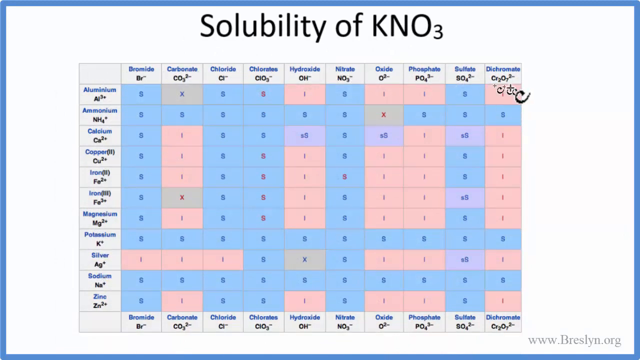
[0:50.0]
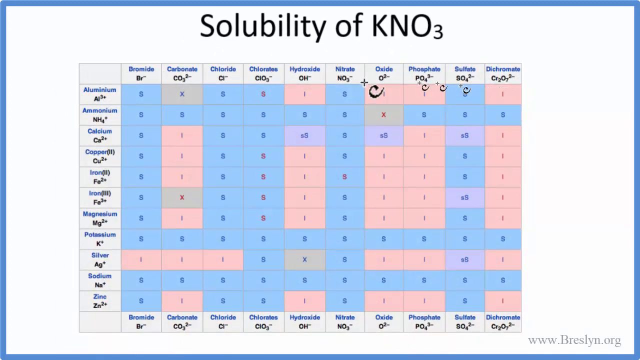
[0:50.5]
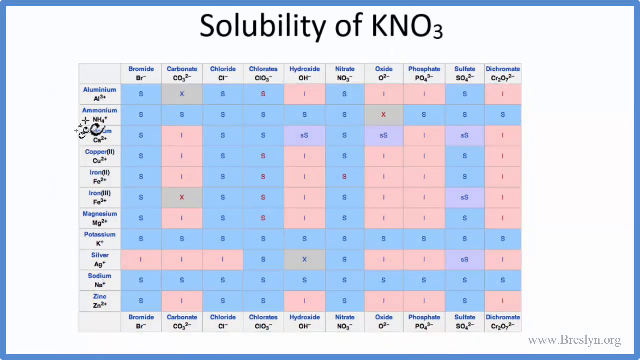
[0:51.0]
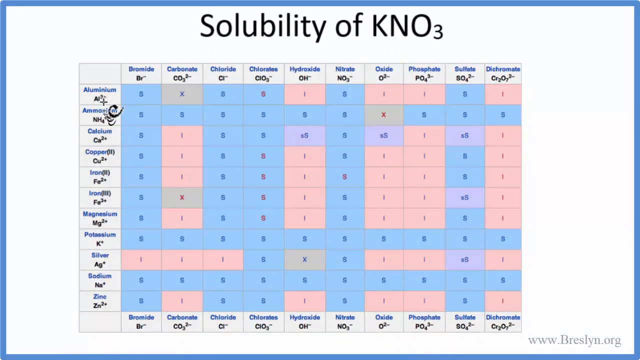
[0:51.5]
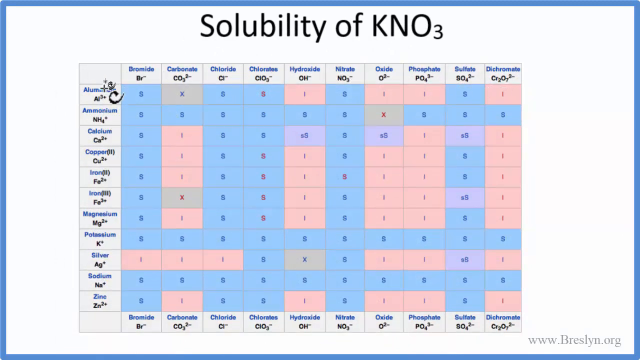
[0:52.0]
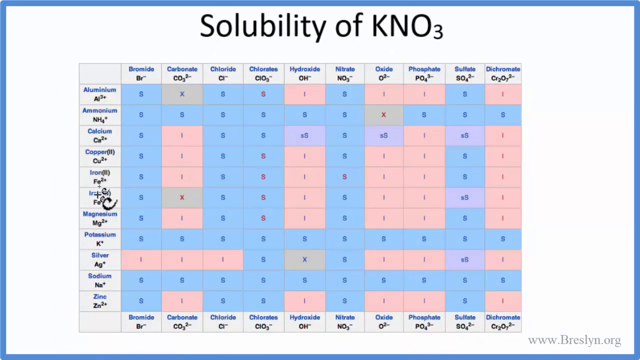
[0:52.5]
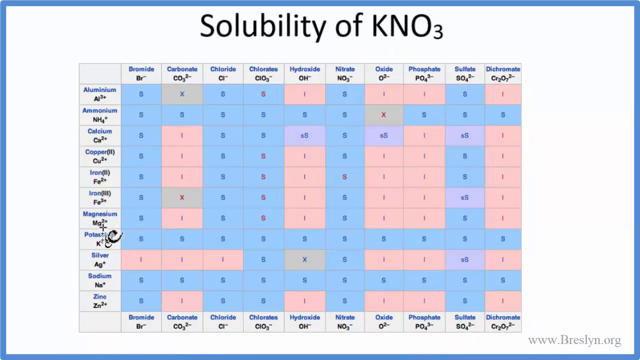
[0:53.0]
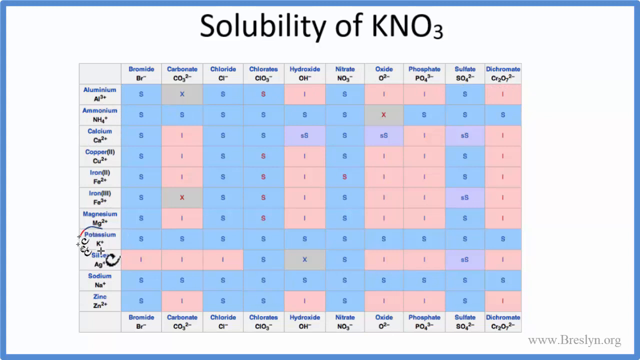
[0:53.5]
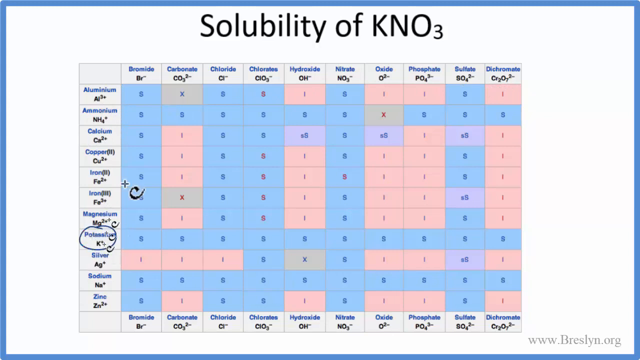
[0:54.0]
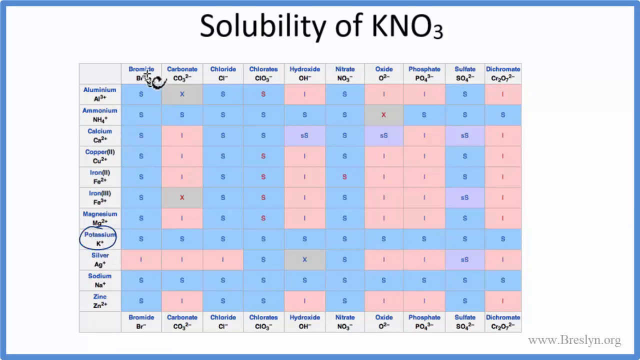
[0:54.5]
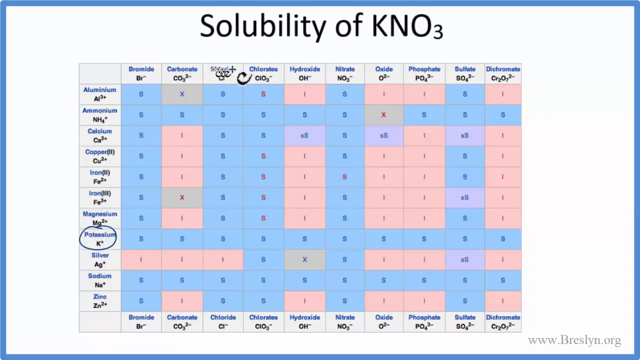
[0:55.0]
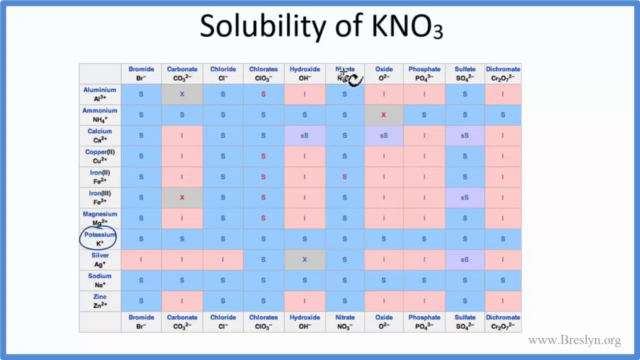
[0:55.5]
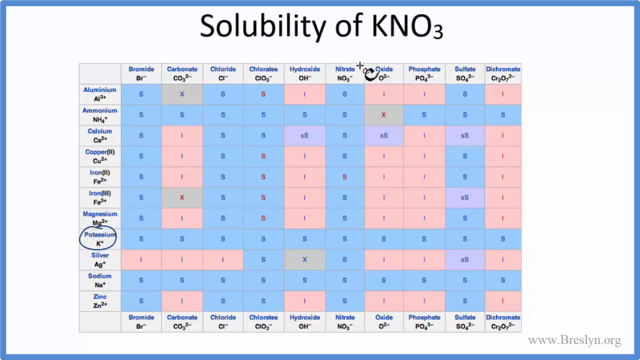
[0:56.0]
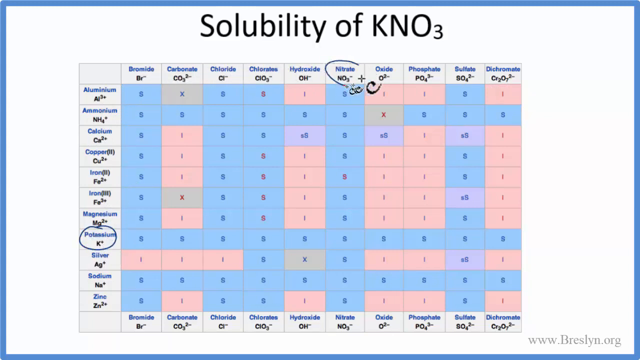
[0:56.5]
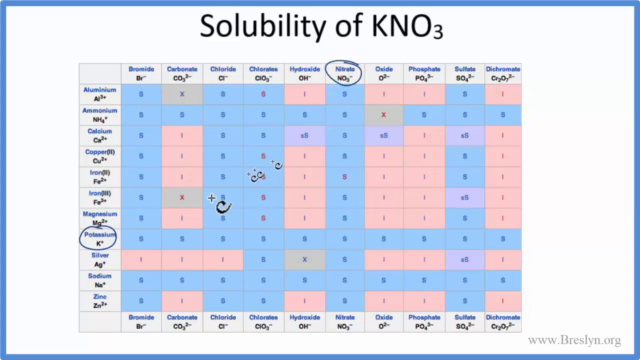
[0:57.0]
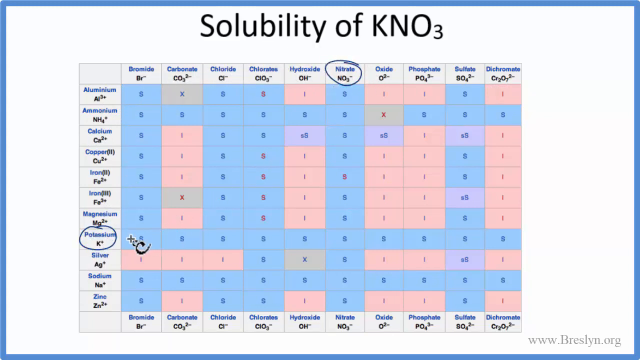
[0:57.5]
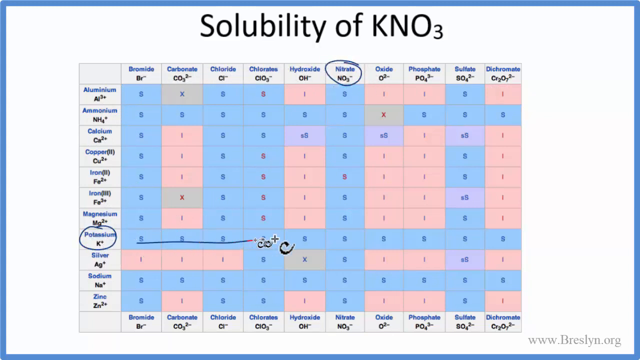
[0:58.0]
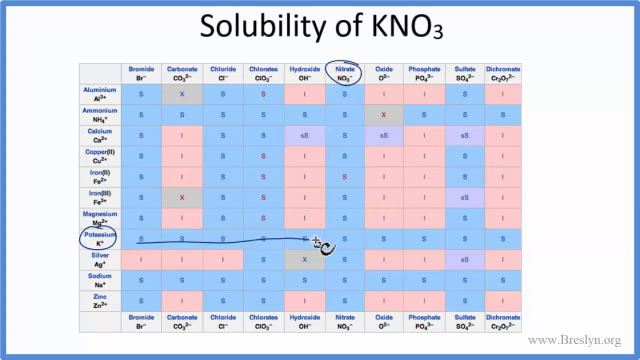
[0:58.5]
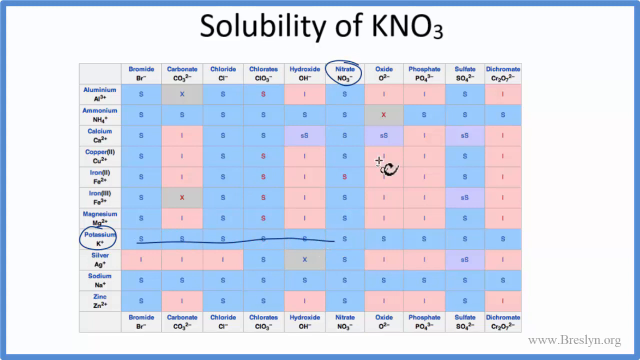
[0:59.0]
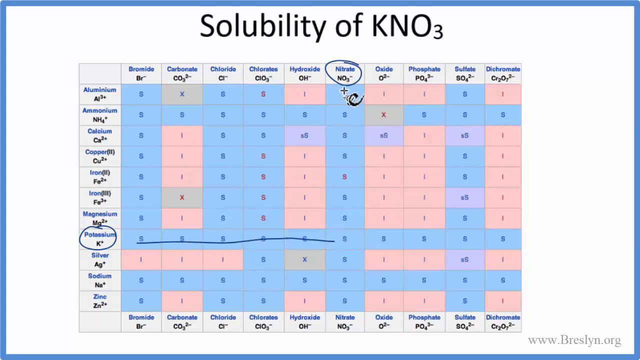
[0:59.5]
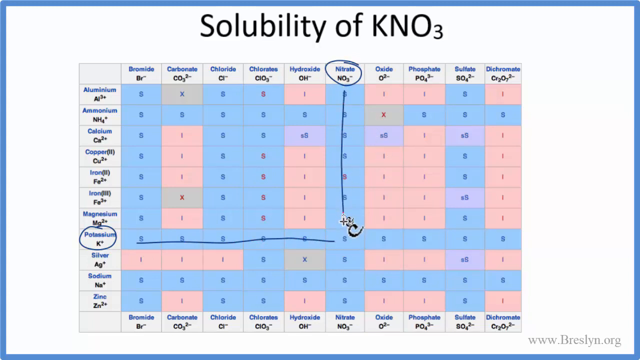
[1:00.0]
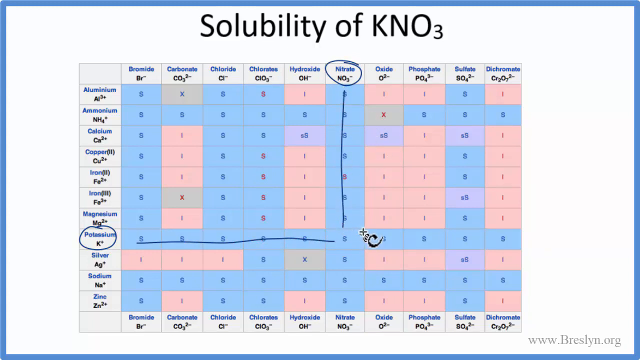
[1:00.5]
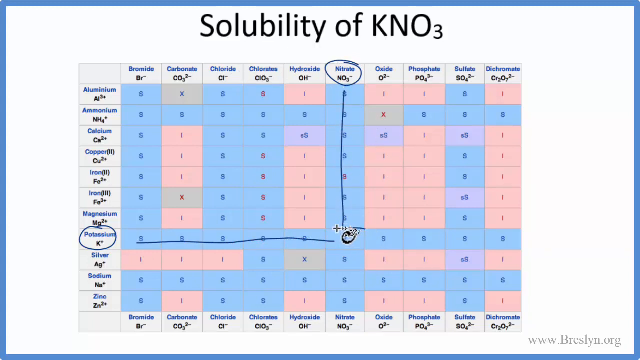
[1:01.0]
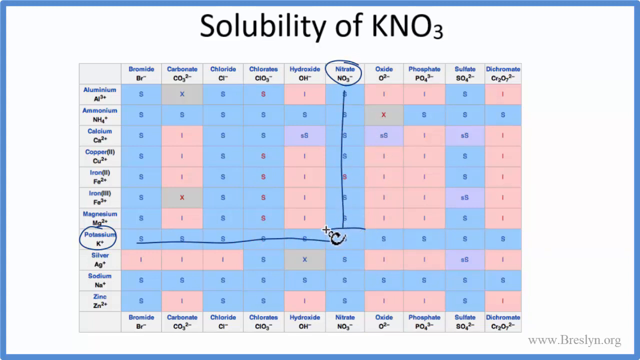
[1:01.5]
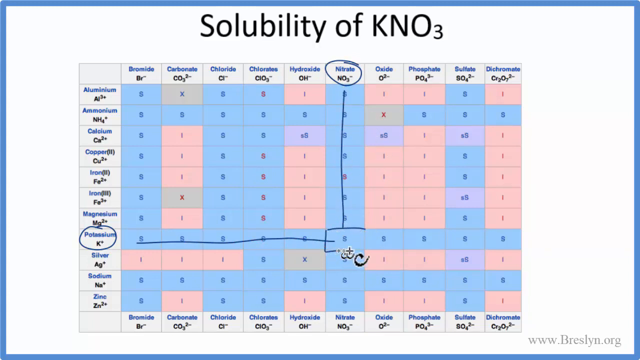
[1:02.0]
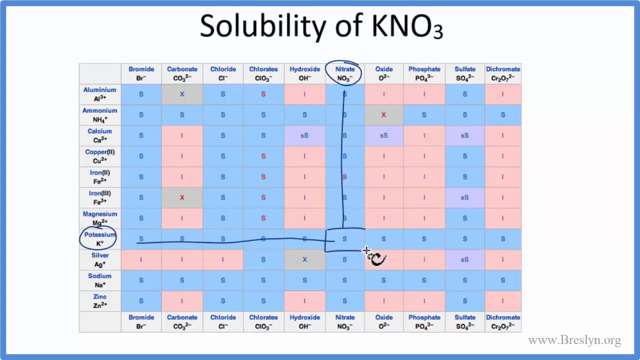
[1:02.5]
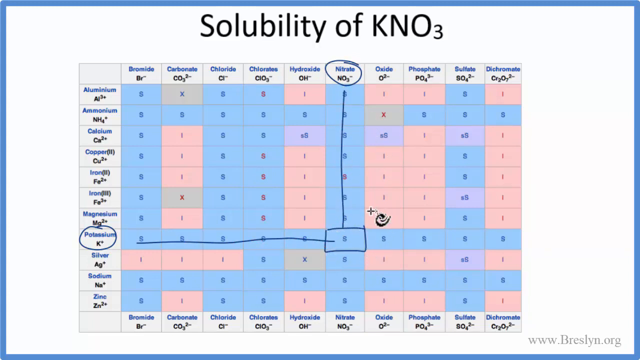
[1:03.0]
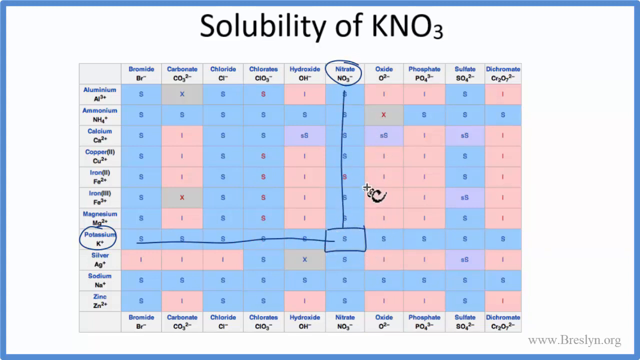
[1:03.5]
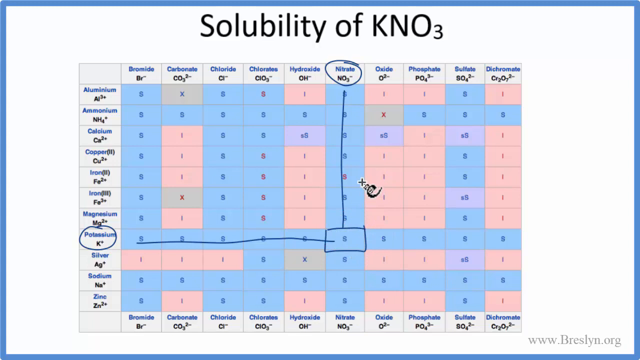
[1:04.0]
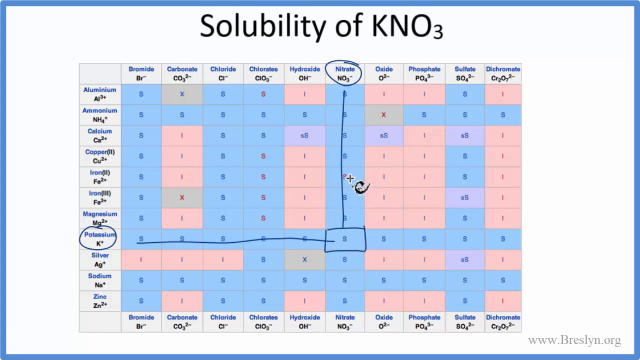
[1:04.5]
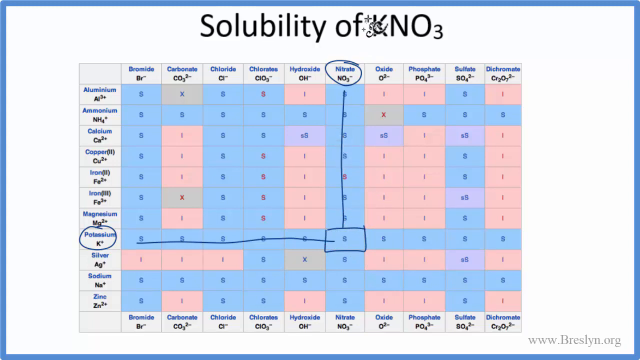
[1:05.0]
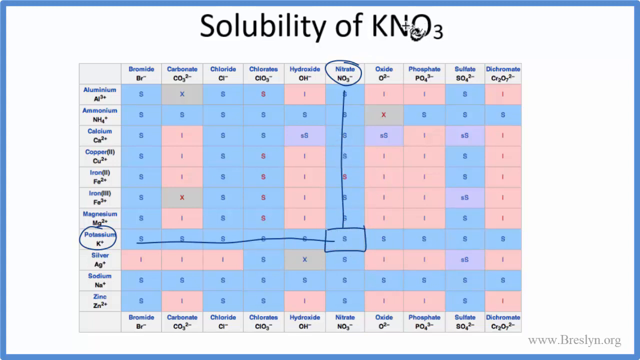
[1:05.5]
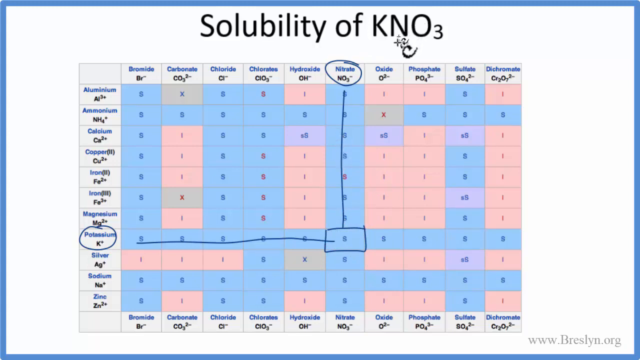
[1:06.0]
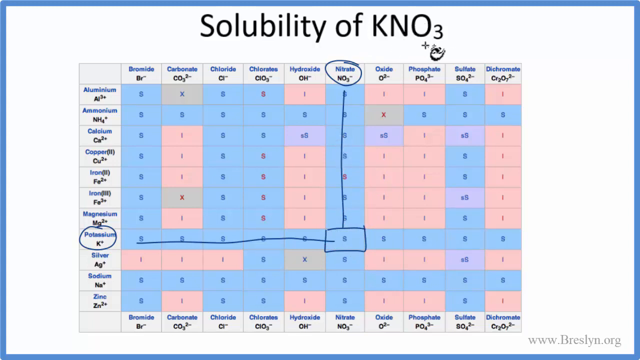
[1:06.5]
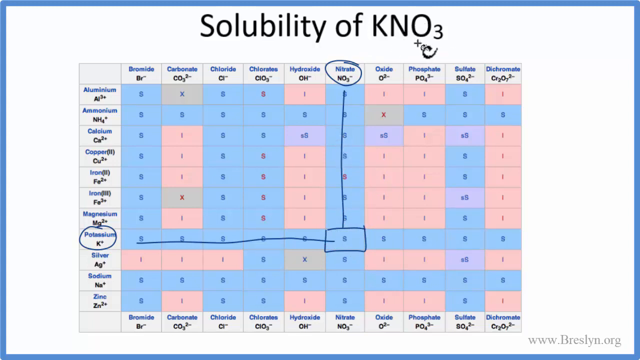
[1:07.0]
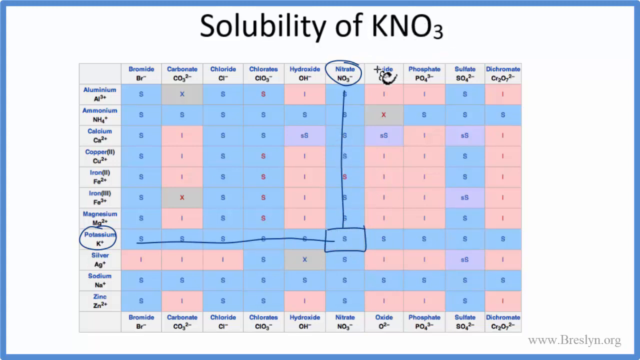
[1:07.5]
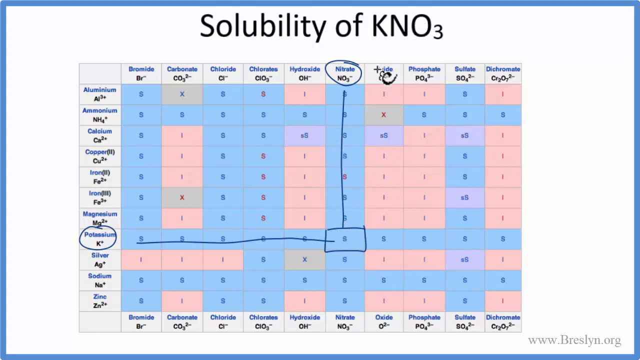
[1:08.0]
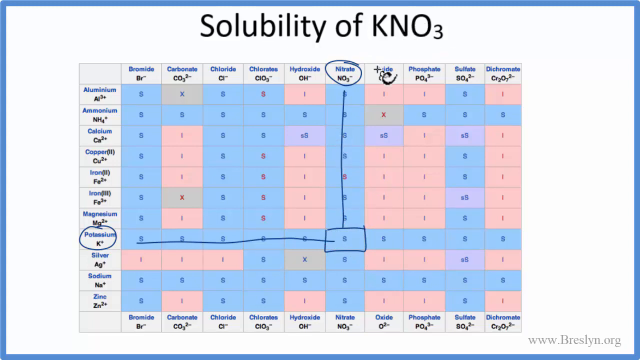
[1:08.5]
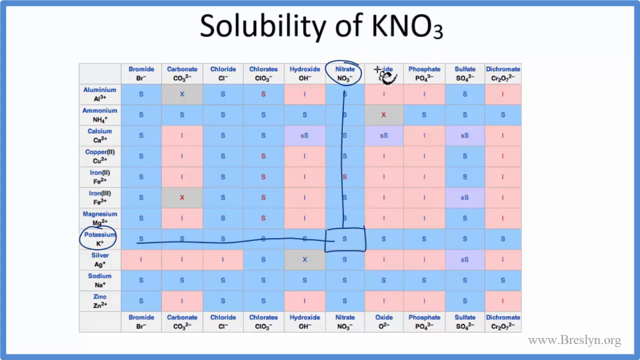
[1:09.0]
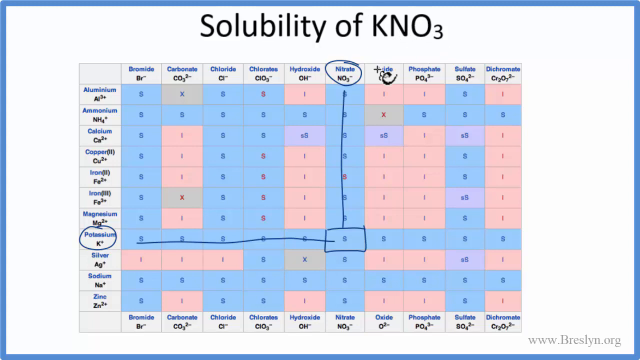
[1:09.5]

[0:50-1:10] The title is shown in black in a bigger font above a chart. The chart's text is hard to read; one entry seems to end in "-ide," possibly chloride. The chart has boxes: most are periwinkle or bluish, some lighter; others are a coral-like color; and some are a slightly darker beige that can look a little gray from an angle. Circles are drawn on each side of the chart.